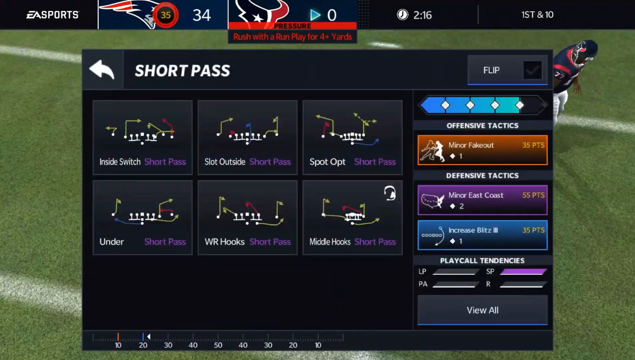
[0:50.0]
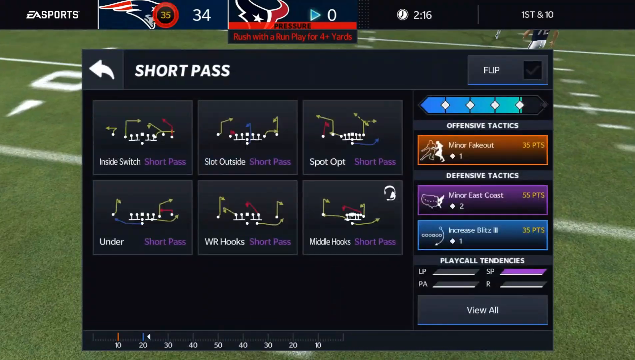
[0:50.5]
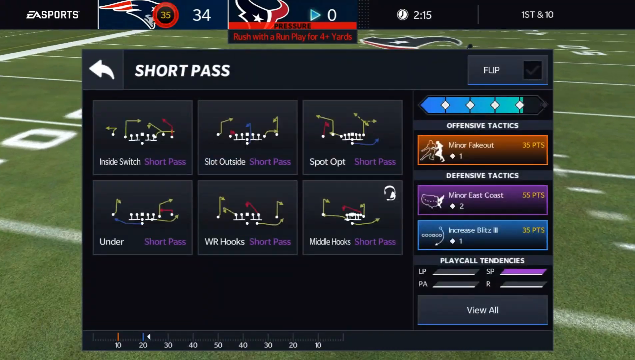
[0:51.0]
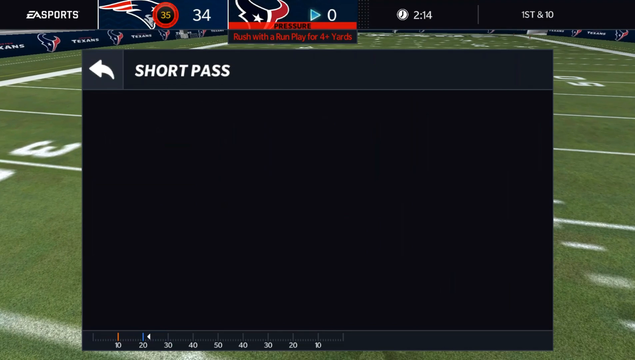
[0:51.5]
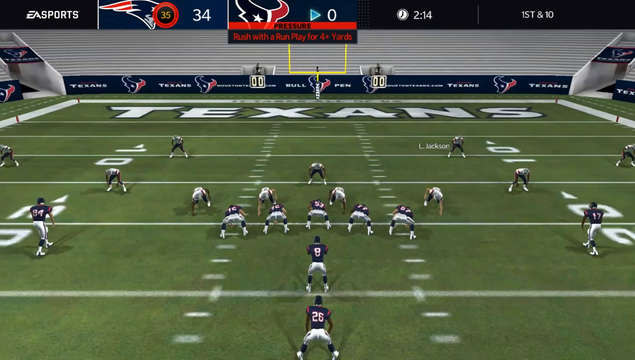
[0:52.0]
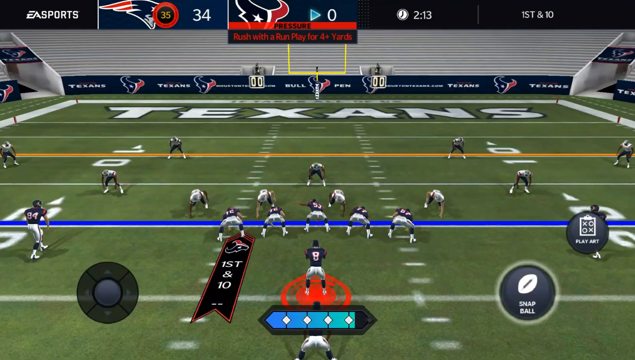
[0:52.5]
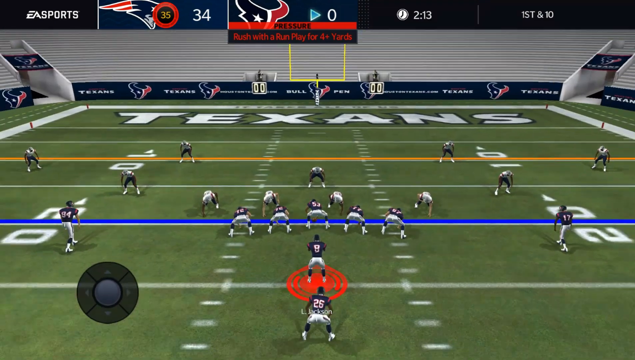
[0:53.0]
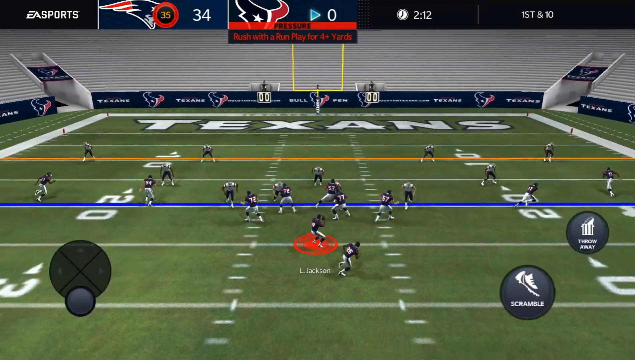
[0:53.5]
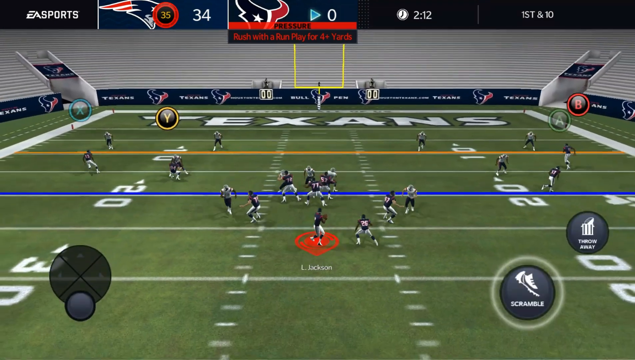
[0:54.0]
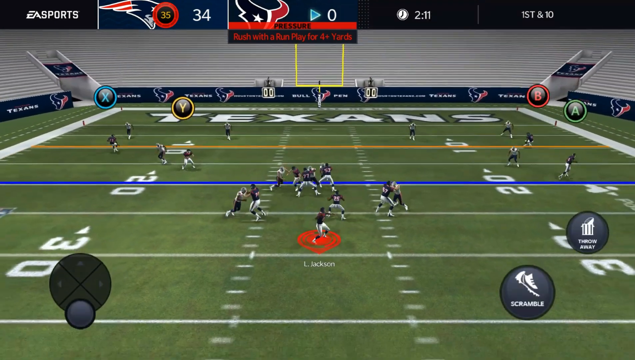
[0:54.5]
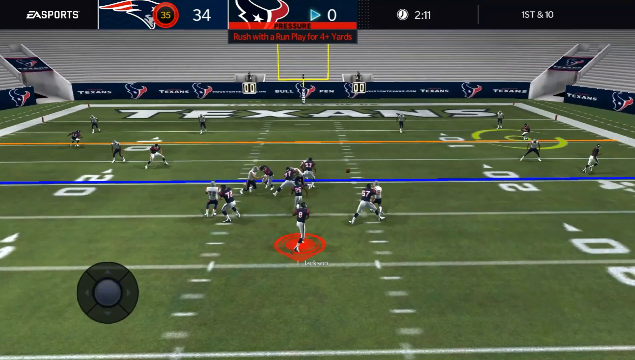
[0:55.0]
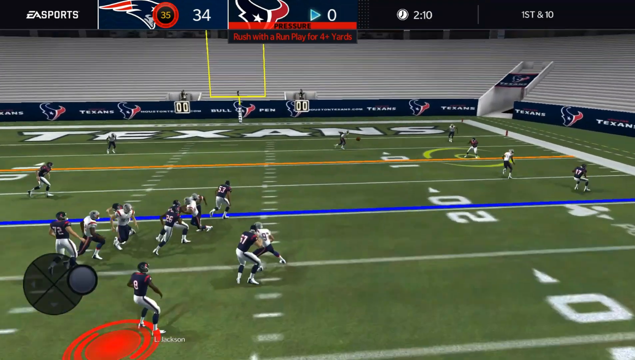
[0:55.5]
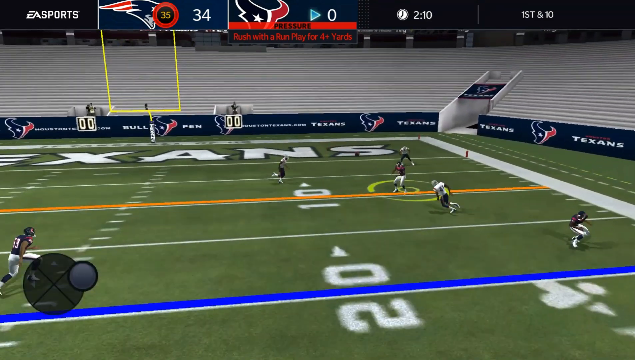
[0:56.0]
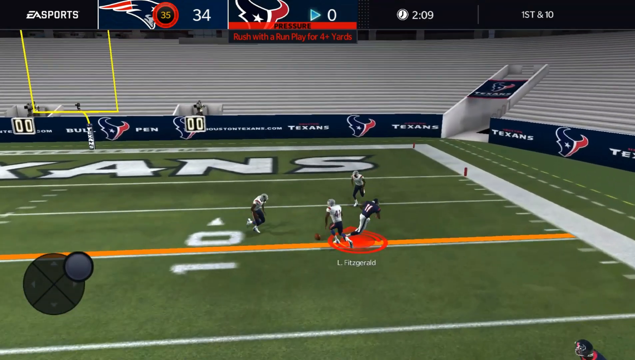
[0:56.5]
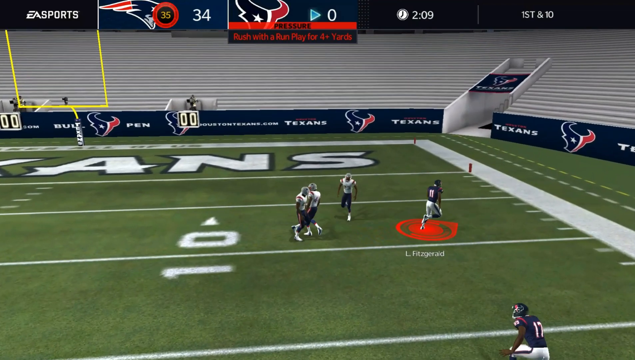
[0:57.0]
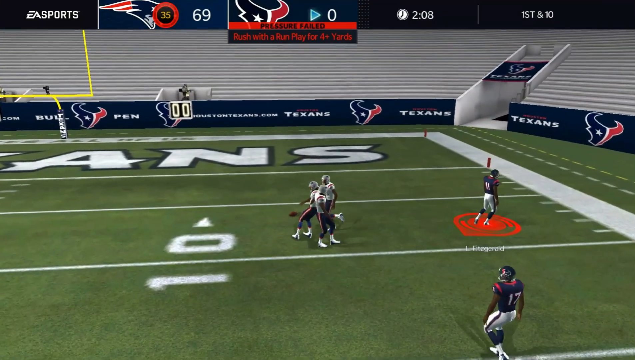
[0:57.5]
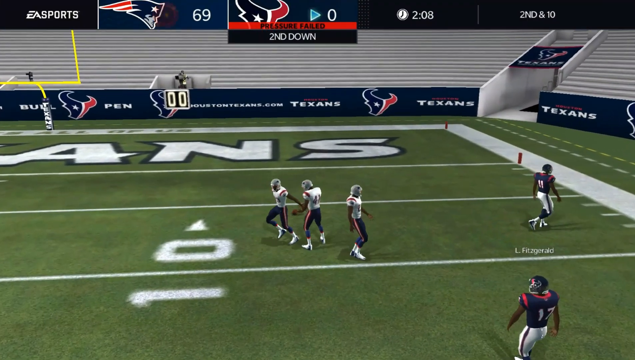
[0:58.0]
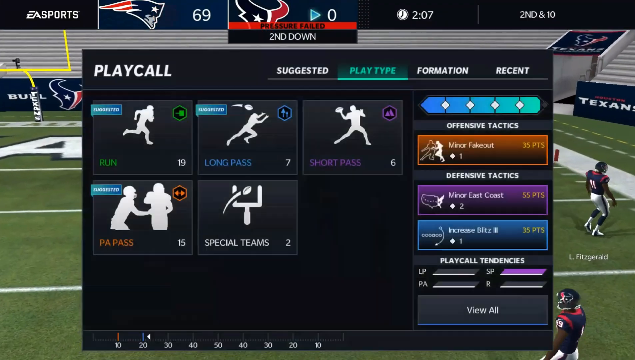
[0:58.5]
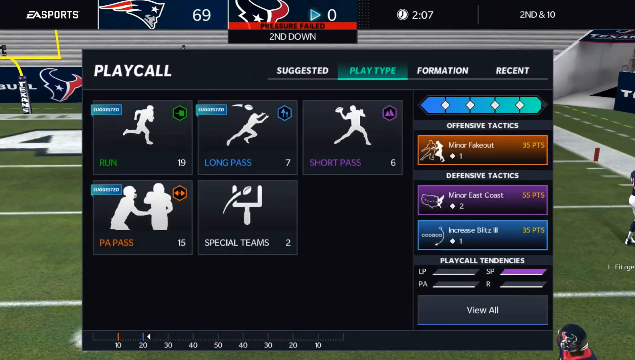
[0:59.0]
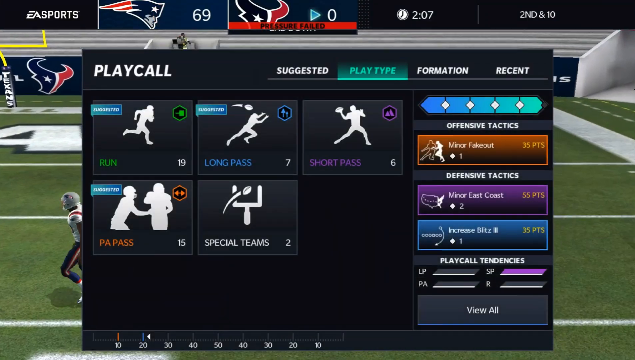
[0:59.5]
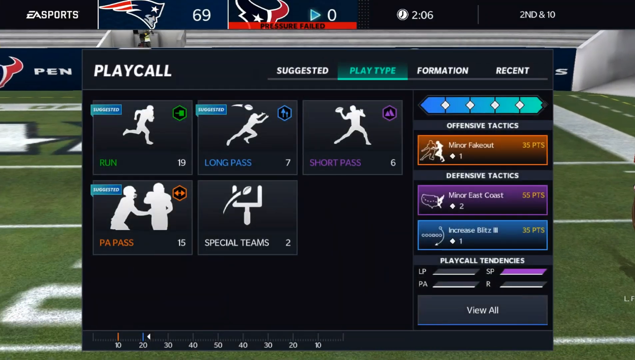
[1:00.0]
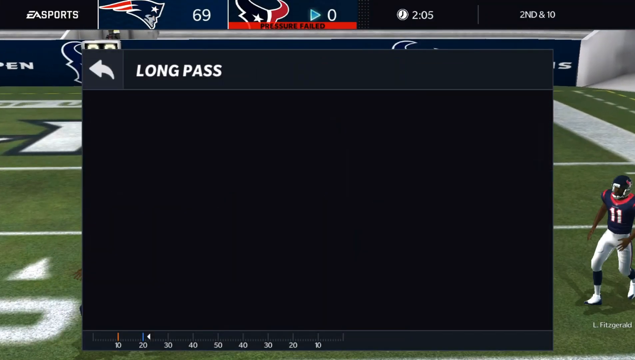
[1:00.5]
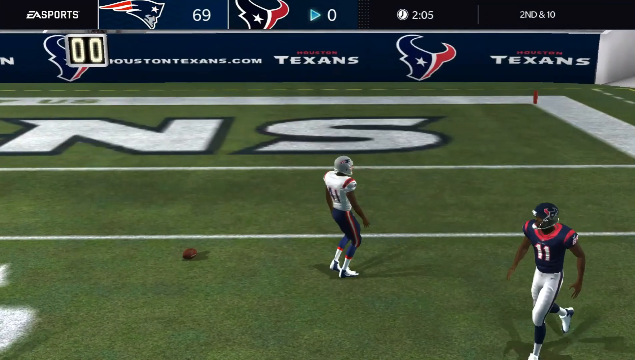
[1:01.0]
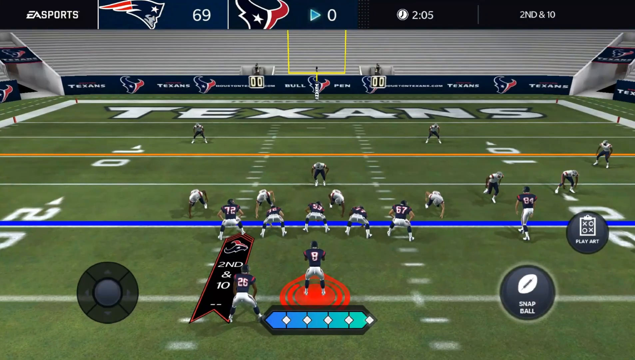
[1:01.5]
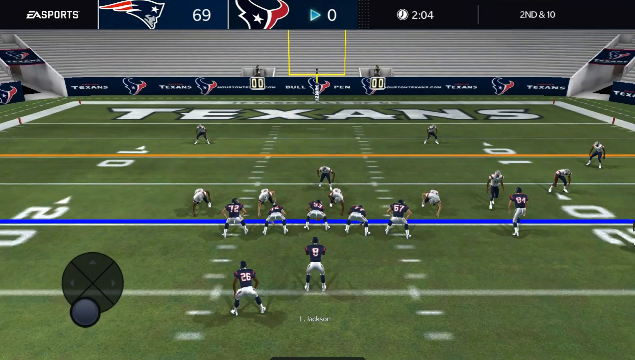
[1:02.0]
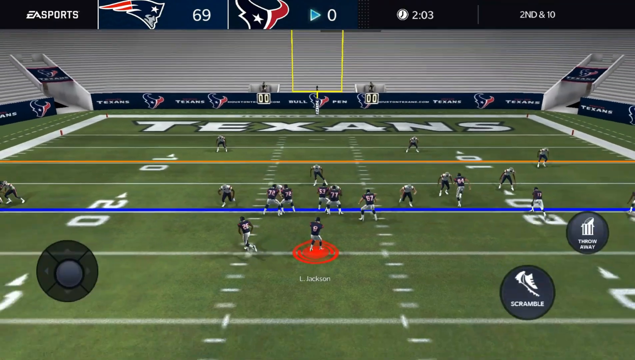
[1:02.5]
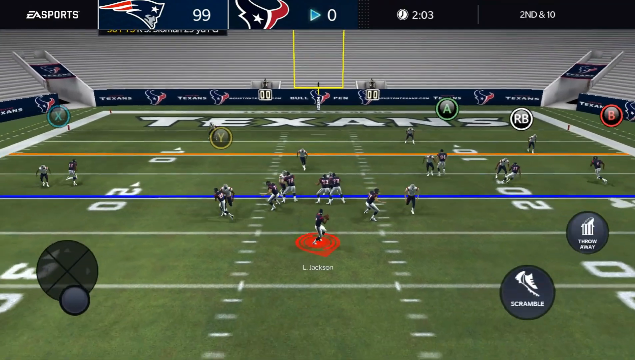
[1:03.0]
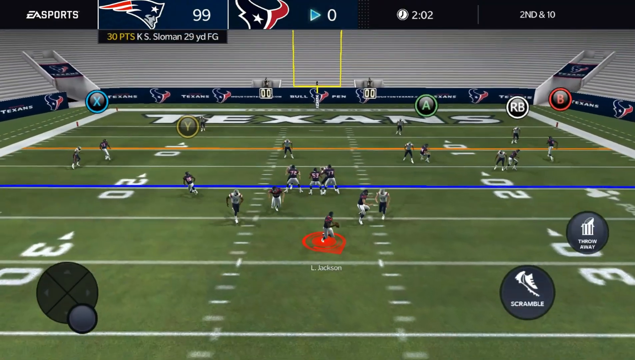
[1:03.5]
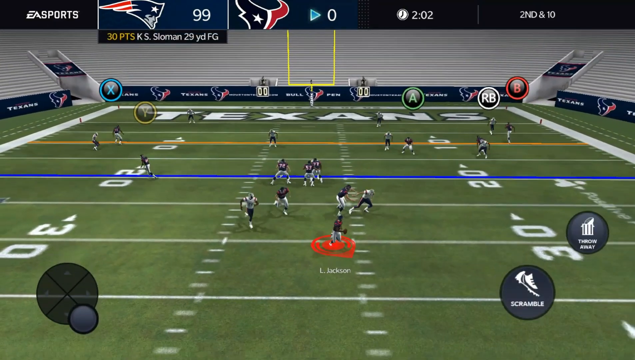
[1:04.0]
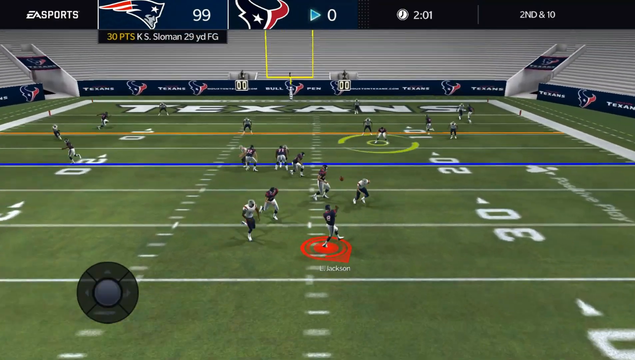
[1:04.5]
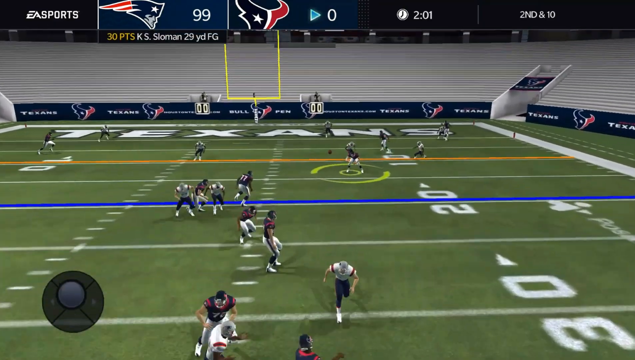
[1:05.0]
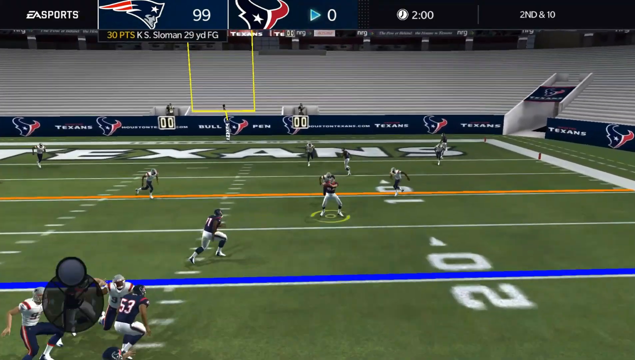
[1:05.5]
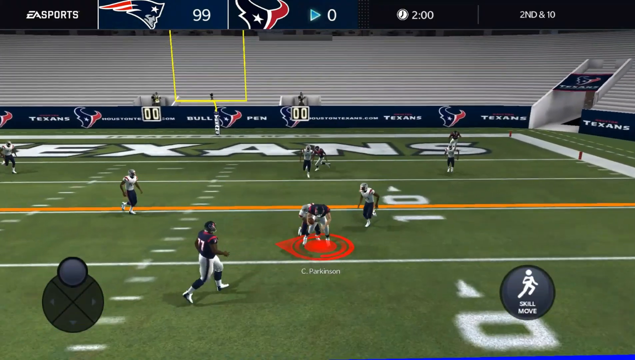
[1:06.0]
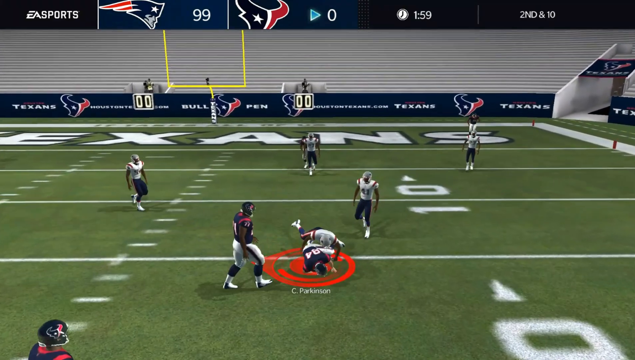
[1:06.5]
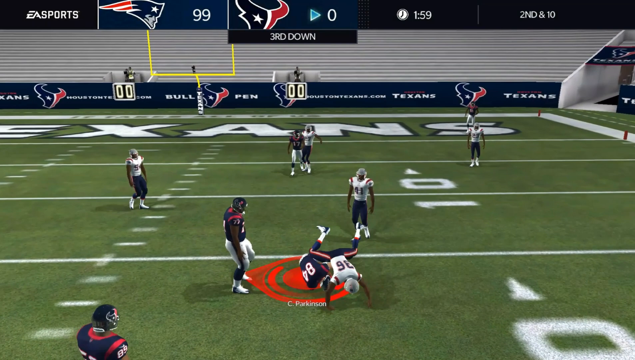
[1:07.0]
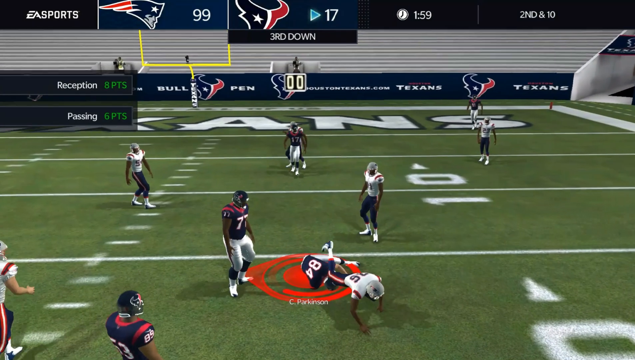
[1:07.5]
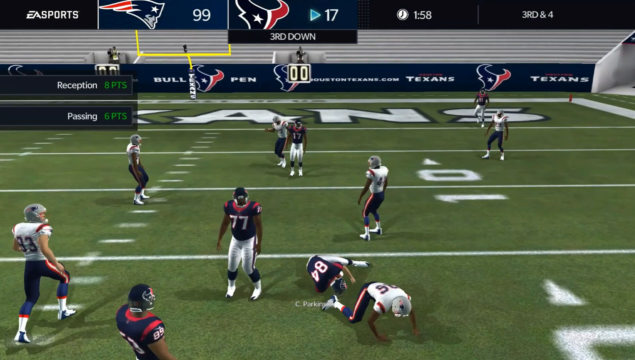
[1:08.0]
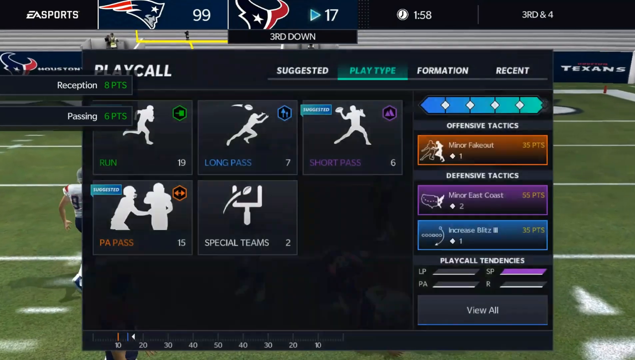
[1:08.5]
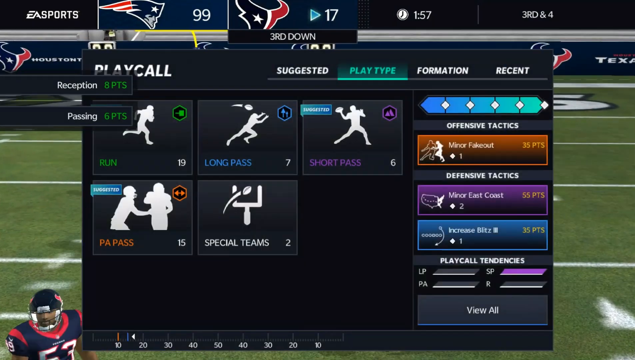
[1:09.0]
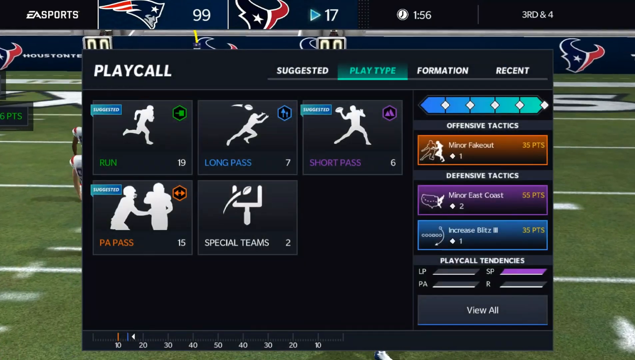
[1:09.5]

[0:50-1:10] A football game is being played, opening on the strategy selection screen, which reads short pass; the player selects short outside. The footage switches to the team getting set up, which the player quickly skips, and the play starts. The player-controlled character on the team is circled in red. That character throws the football toward a character surrounded by a yellow circle, marking the target, who then gets a red circle, but the football is intercepted by the opposing team. The menu of play calls and tactics pops up again, and the player chooses a long pass and one of the strategies. The cutscenes are quickly skipped, and the player throws the football again, trying for a touchdown. This time the ball is caught, ending up at the 15-yard line, and the player chooses another short pass strategy.